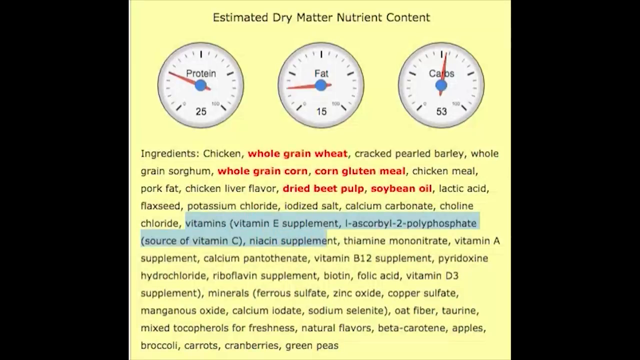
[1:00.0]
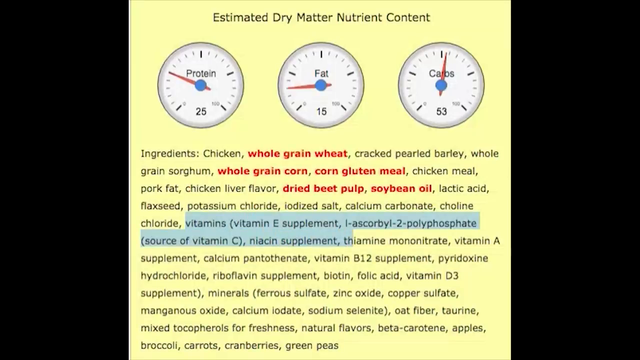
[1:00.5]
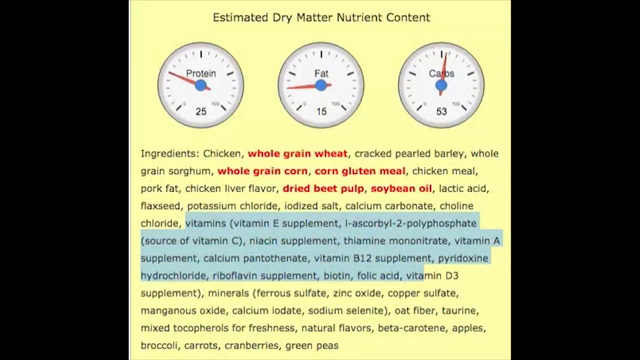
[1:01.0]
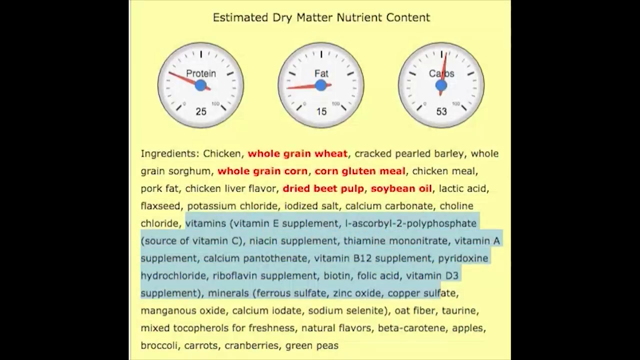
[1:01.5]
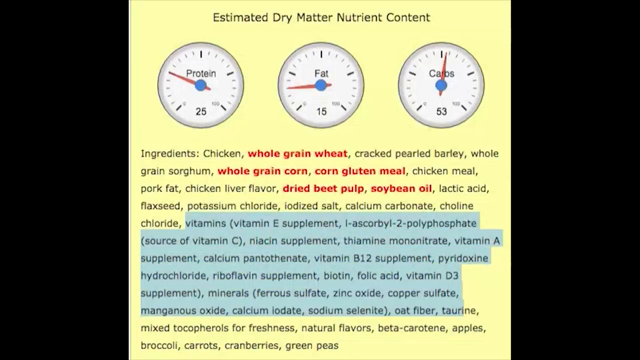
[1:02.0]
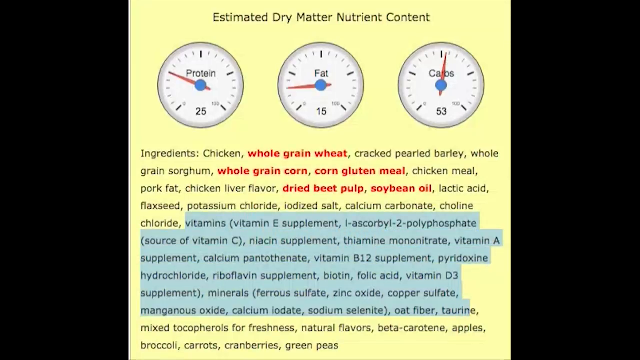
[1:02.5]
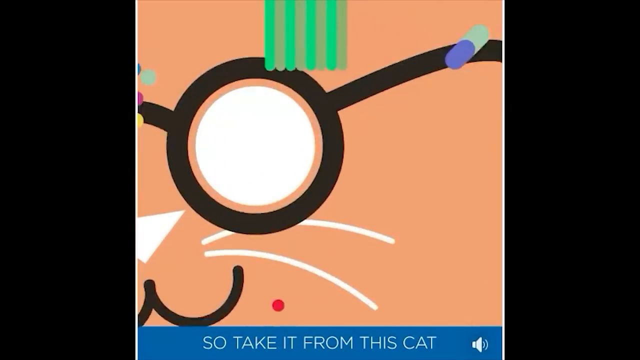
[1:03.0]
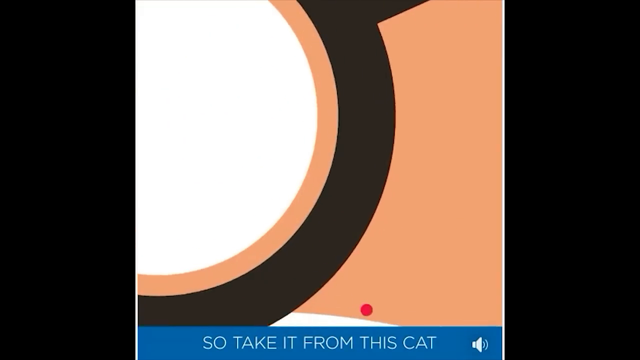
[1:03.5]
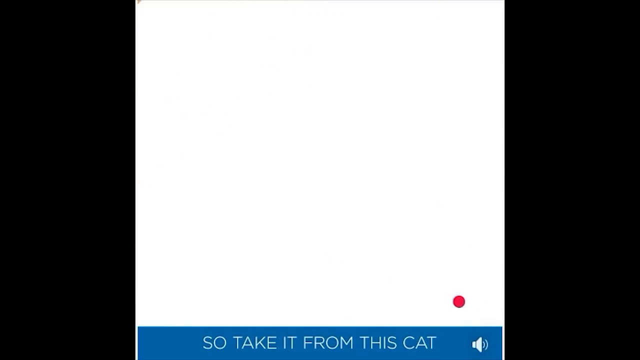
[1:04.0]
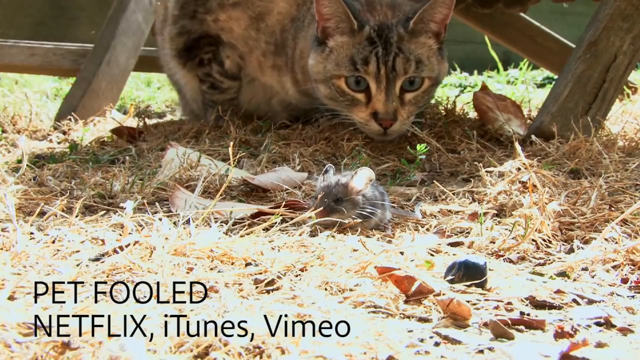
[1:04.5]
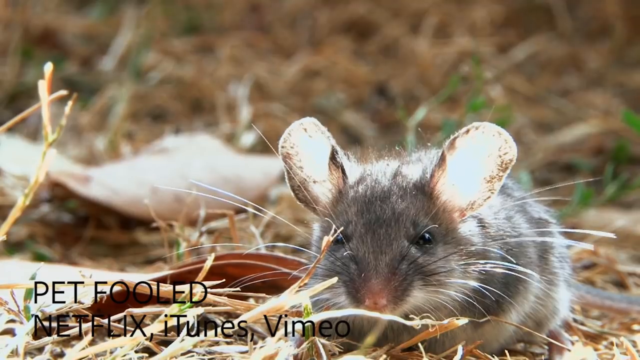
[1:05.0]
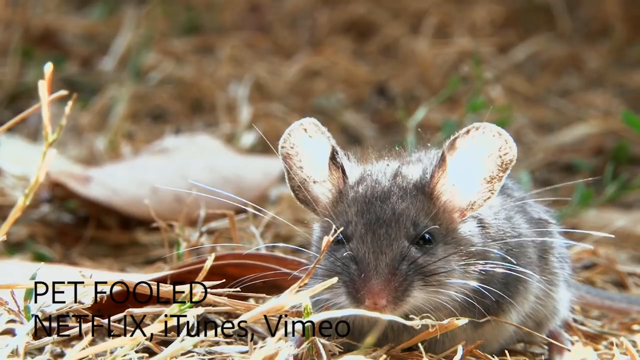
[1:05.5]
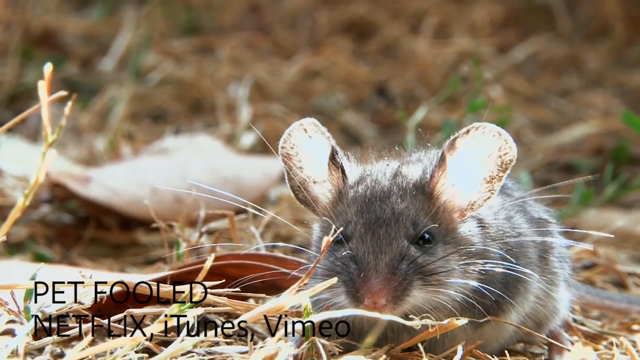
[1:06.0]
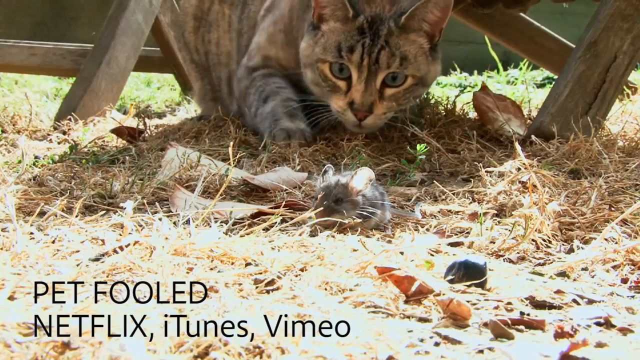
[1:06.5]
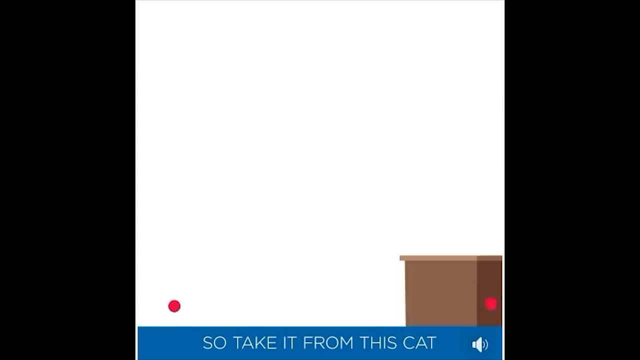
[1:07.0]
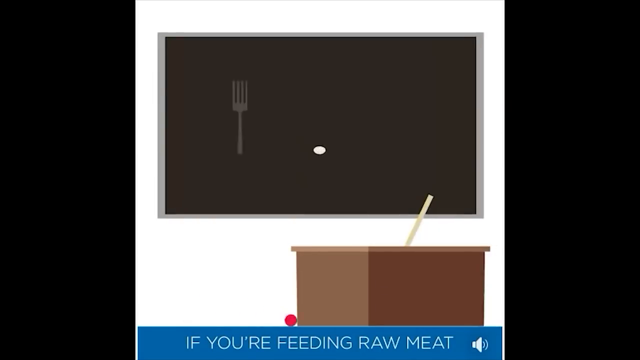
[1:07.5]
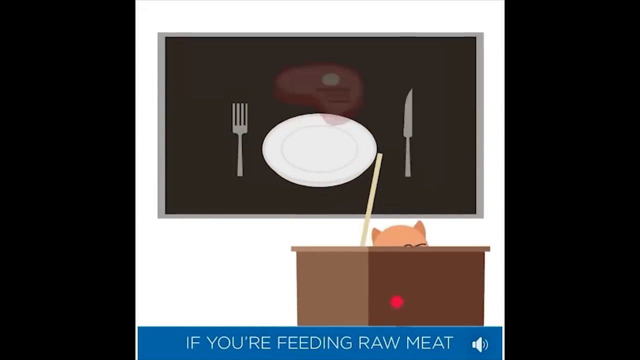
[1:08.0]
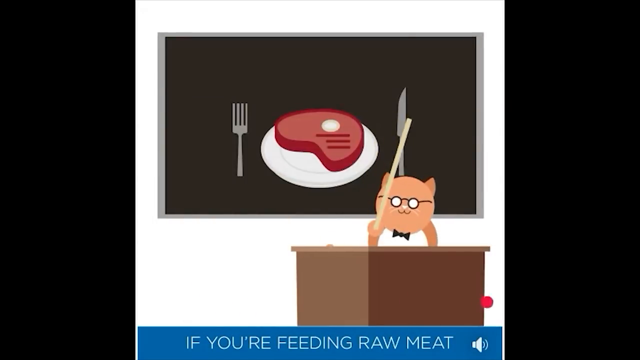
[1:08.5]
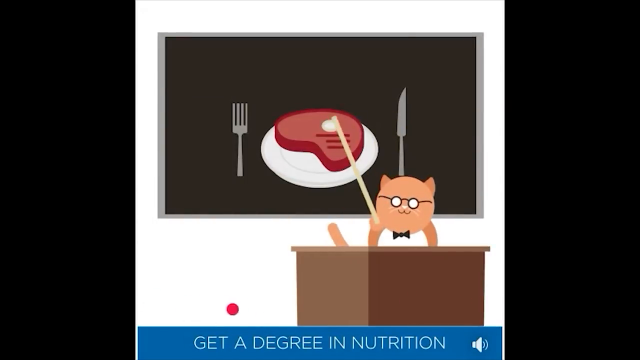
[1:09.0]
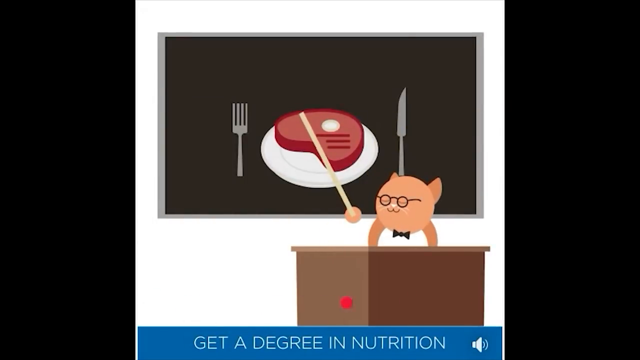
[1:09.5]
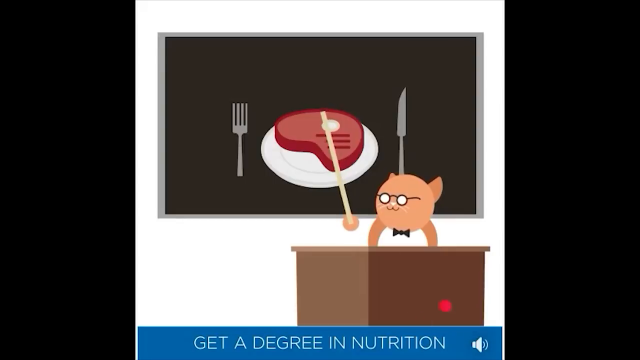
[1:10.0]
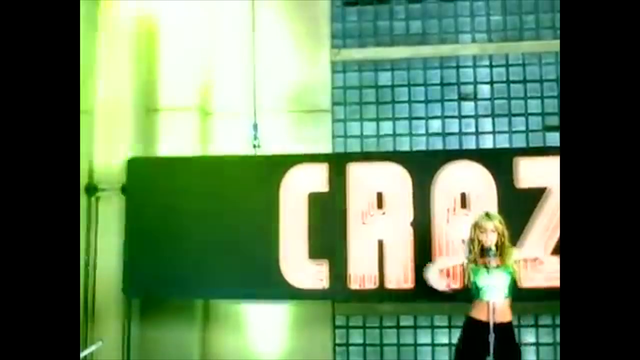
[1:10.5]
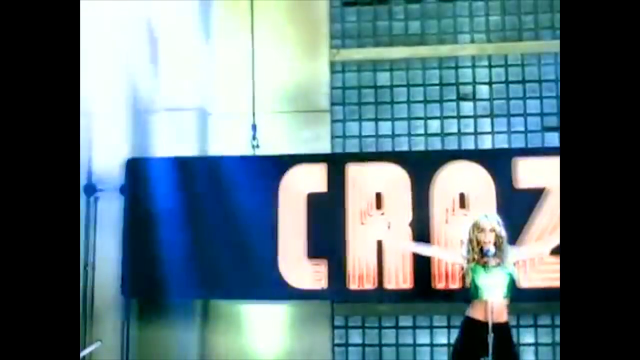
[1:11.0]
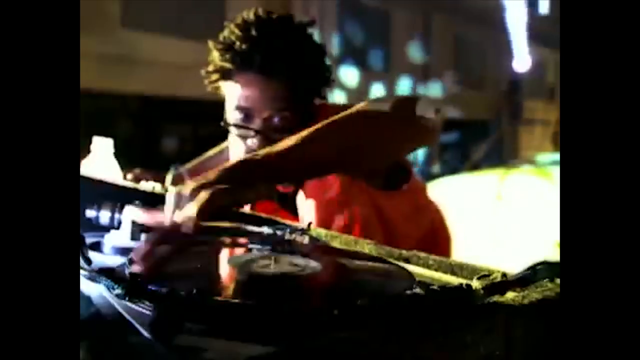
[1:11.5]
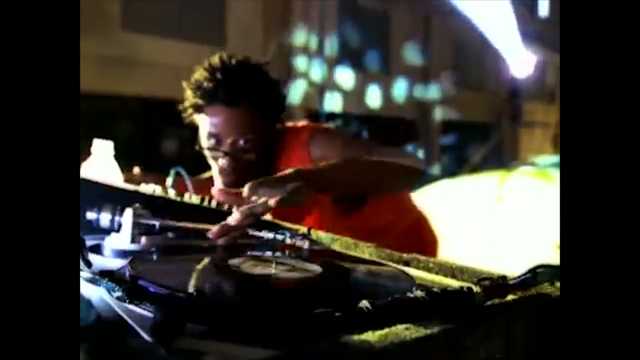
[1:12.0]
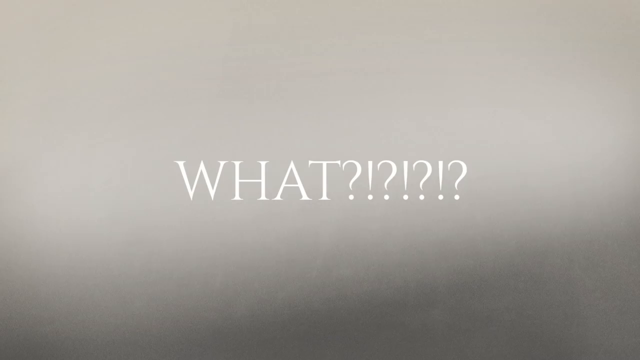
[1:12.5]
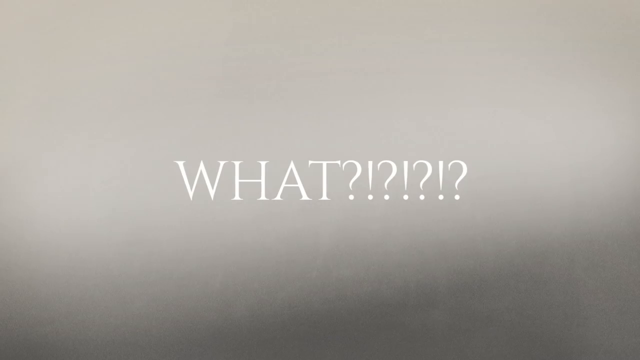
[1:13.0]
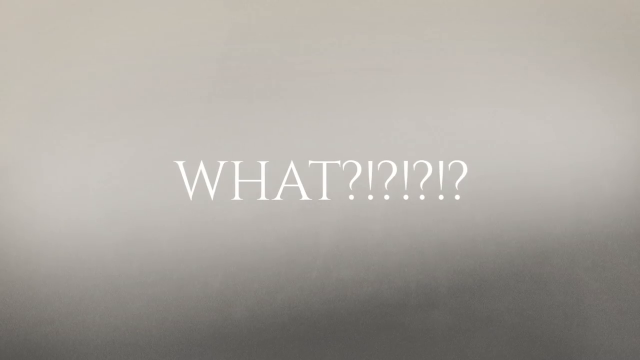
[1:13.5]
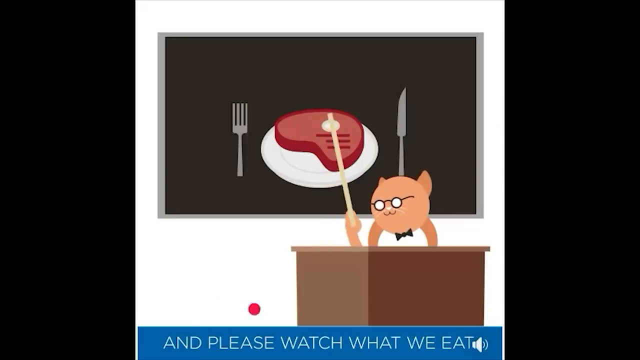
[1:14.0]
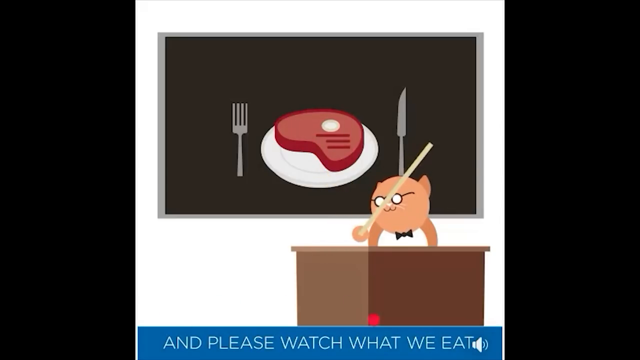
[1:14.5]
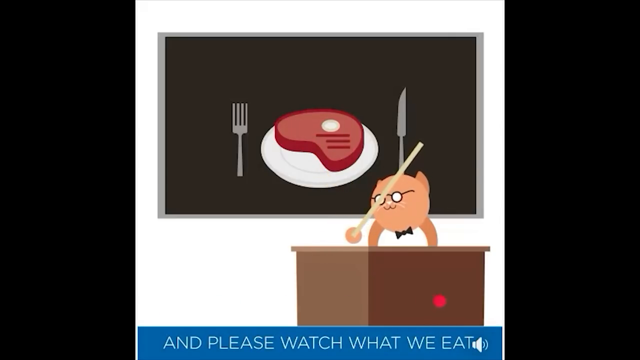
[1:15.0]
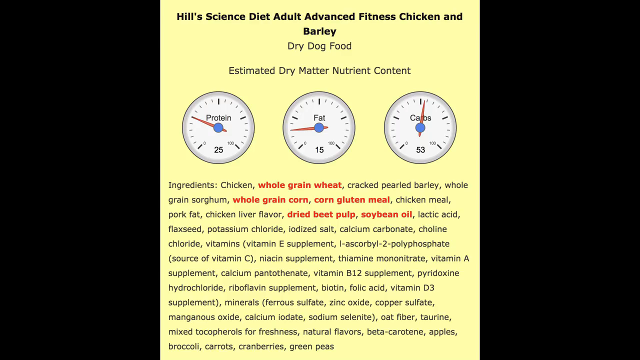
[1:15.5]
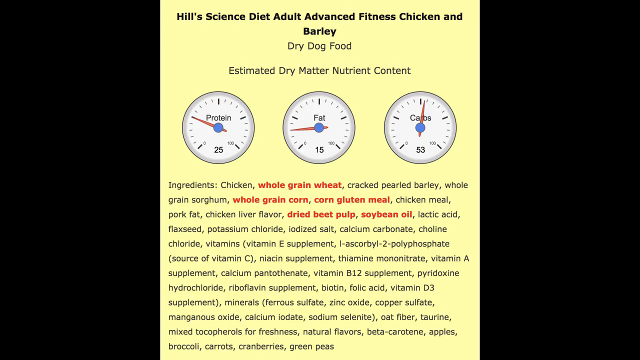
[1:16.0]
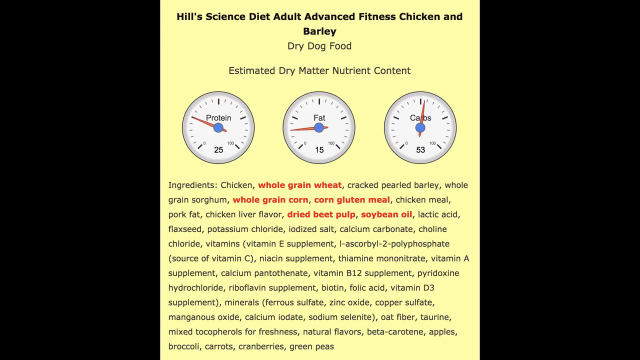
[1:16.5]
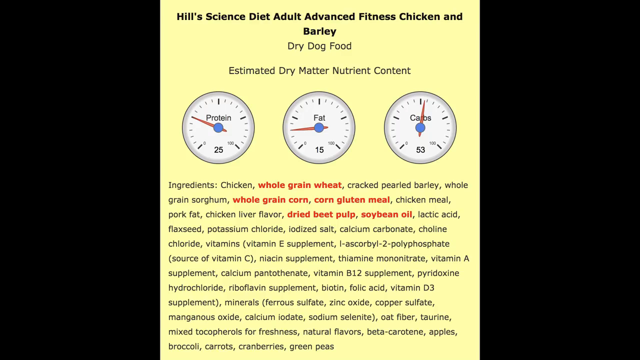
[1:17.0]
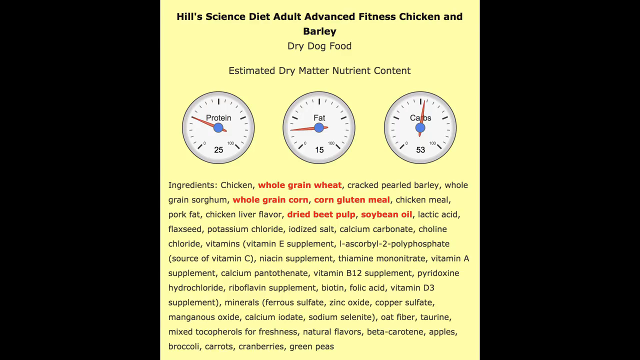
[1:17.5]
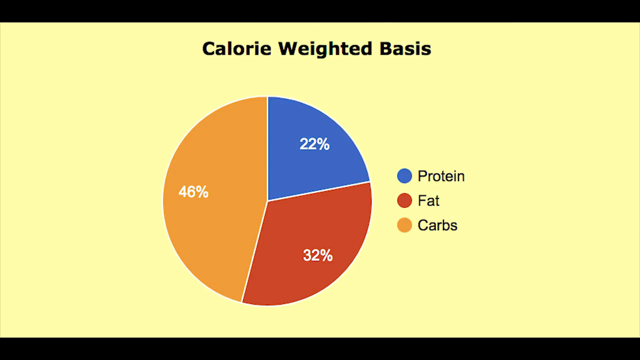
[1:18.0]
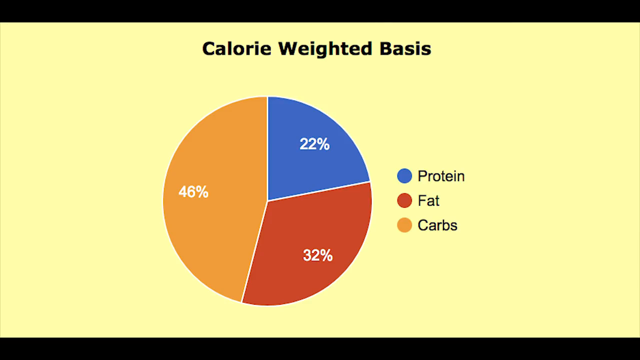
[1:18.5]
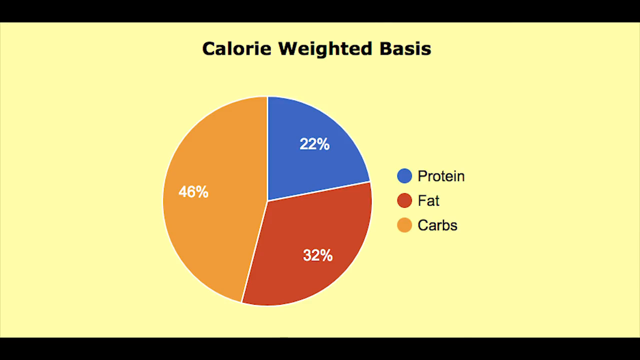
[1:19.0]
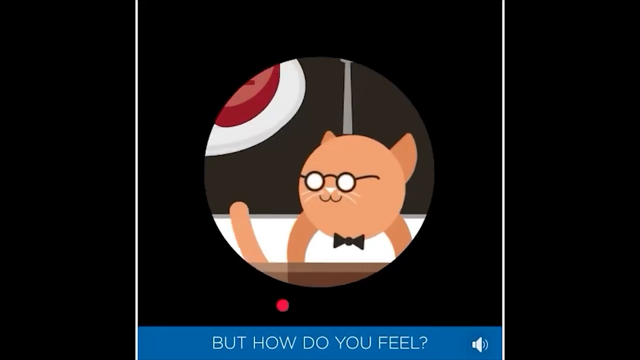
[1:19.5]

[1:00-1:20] On the yellow screen, some of the ingredients are highlighted in blue, from the vitamins all the way down. The screen changes to the cartoon cat wearing glasses; the camera zooms into its left lens, revealing the cat and the mouse outside seen earlier. The scene returns to the cartoon classroom with the cat behind the desk. On the blackboard is the meat on a plate with a fork on the left and a knife on the right, and the cat points at the meat with a stick in its right hand. Two brief clips, apparently from music videos, appear for less than a second each, followed by a plain screen with "WHAT" in big capital letters followed by lots of question marks and exclamation marks. The video returns to the classroom, then to the ingredients of the dry dog food, and then to the pie chart seen earlier. The clips move quite quickly.